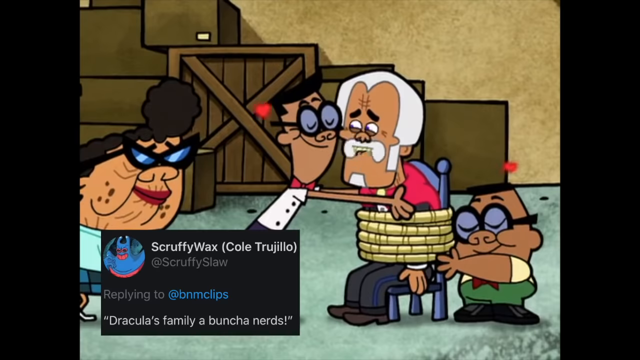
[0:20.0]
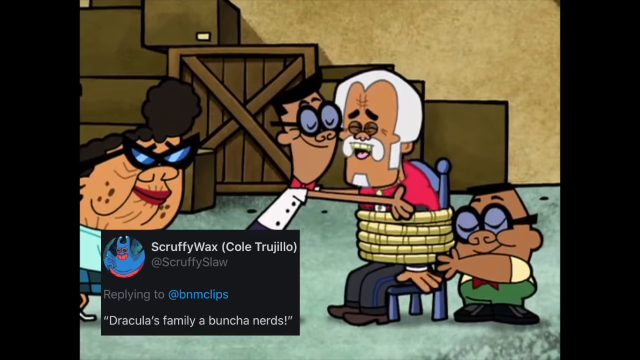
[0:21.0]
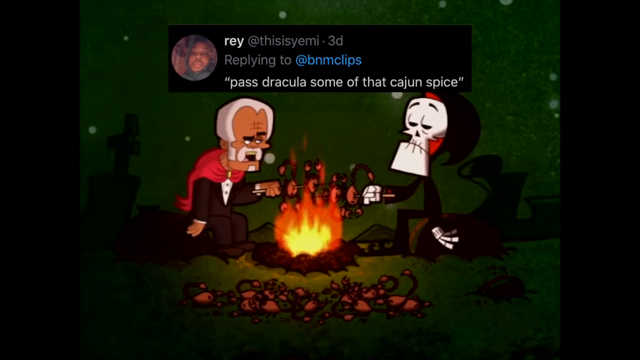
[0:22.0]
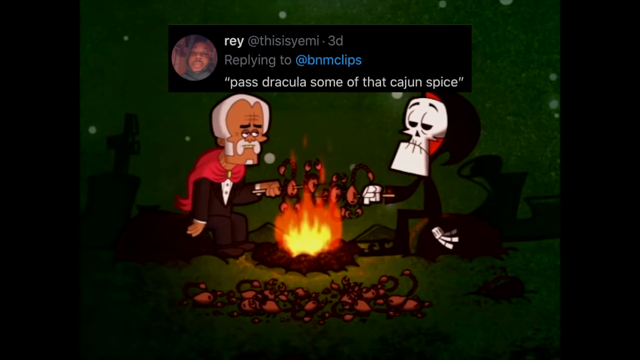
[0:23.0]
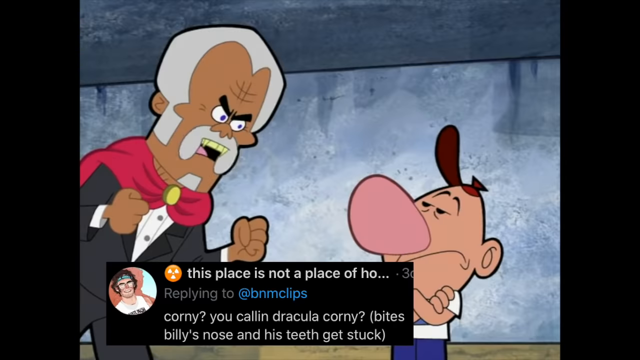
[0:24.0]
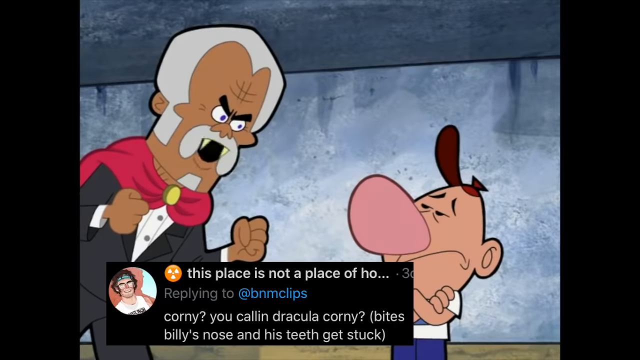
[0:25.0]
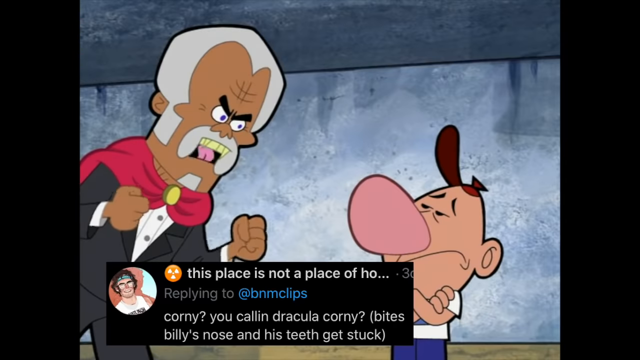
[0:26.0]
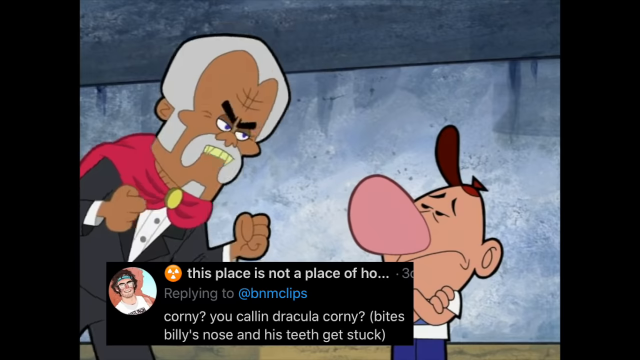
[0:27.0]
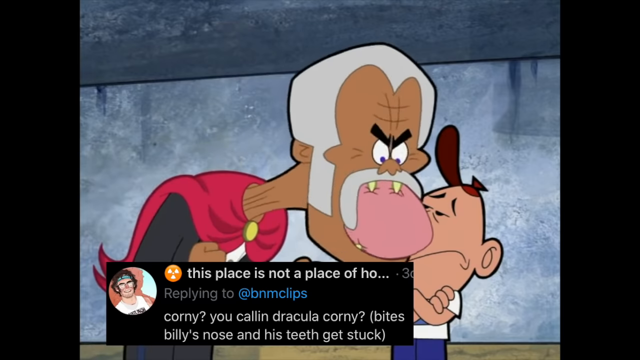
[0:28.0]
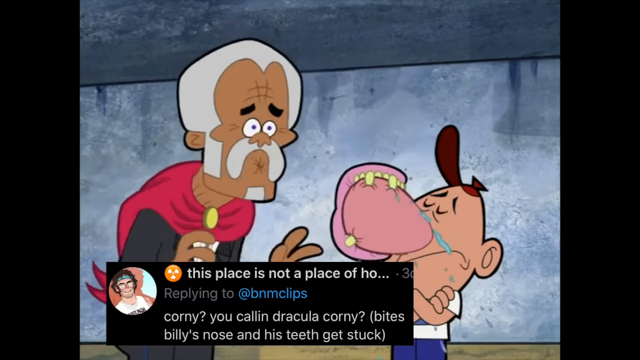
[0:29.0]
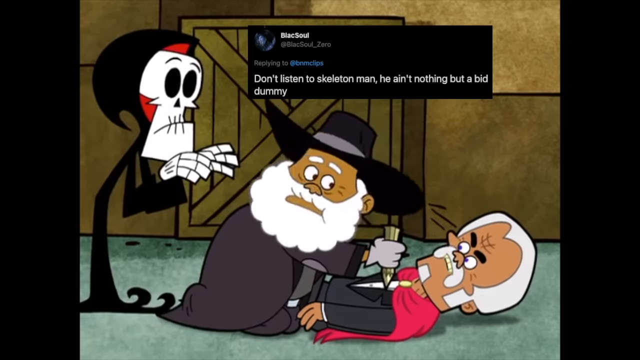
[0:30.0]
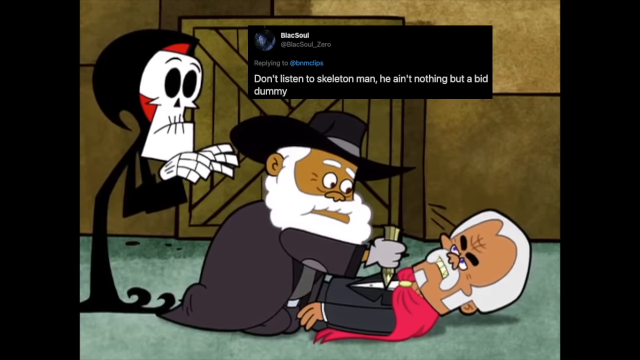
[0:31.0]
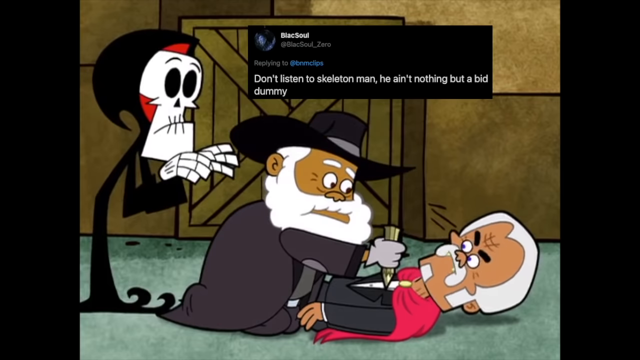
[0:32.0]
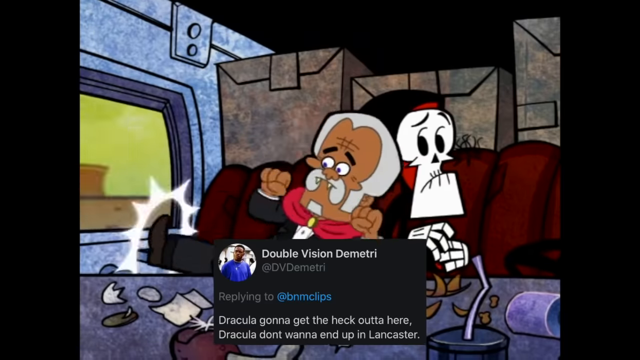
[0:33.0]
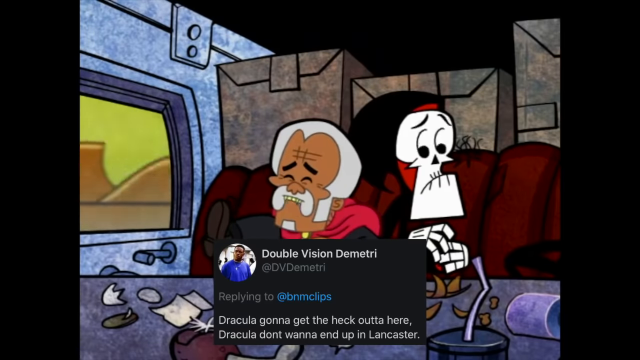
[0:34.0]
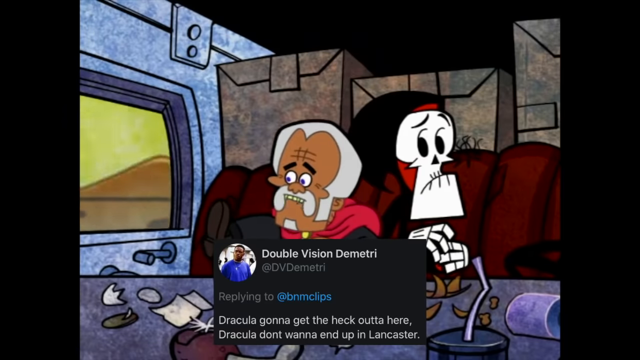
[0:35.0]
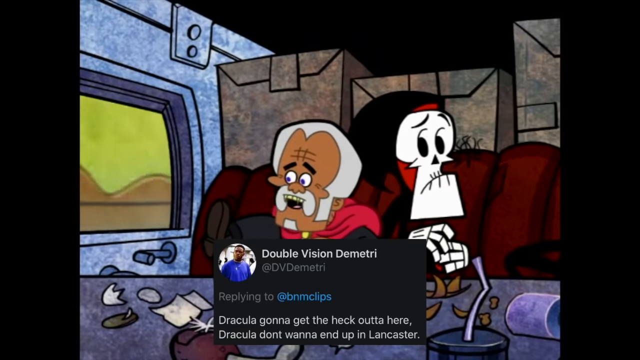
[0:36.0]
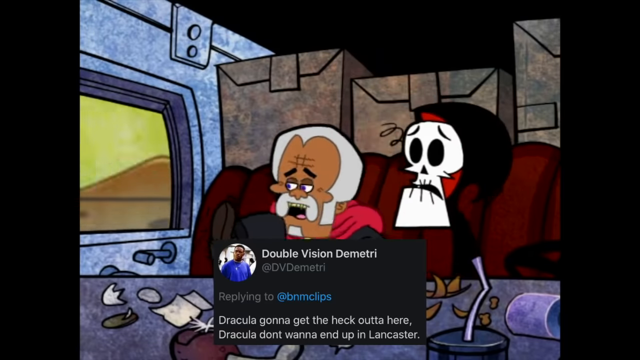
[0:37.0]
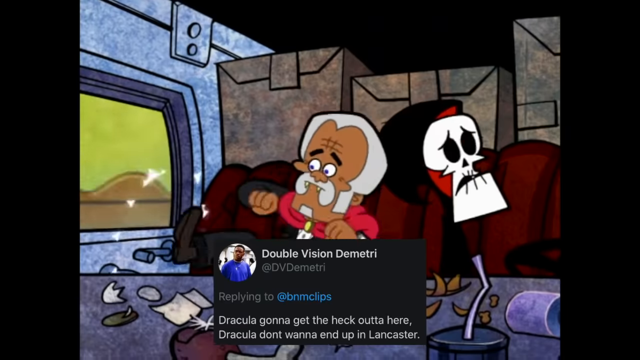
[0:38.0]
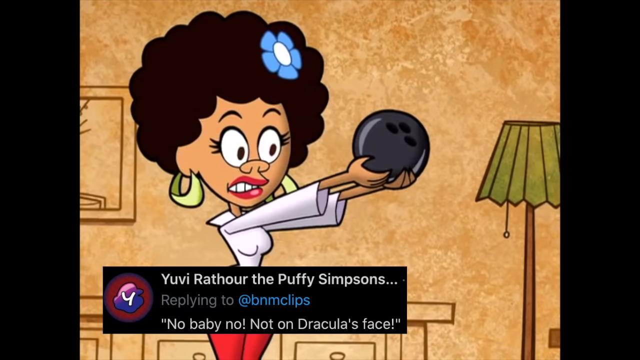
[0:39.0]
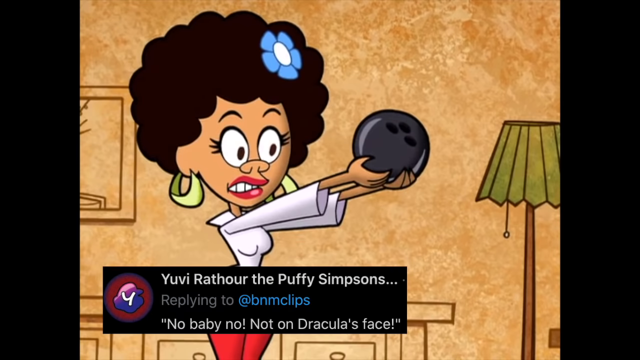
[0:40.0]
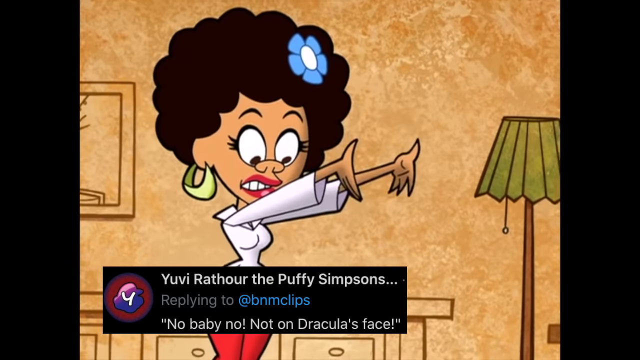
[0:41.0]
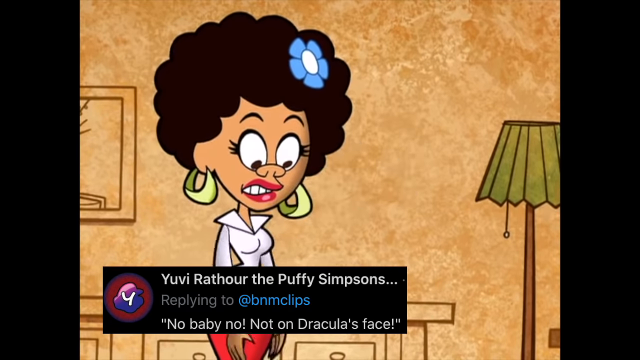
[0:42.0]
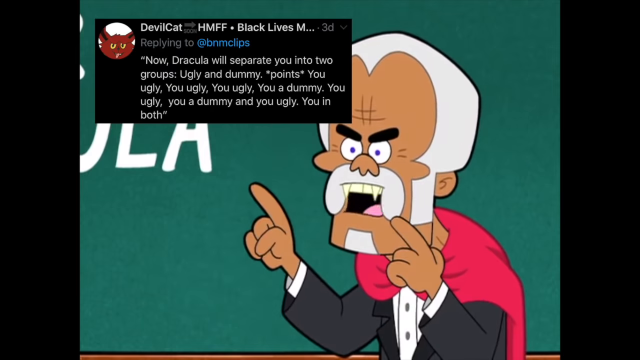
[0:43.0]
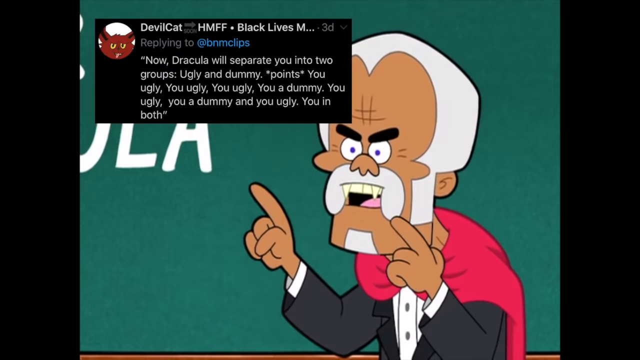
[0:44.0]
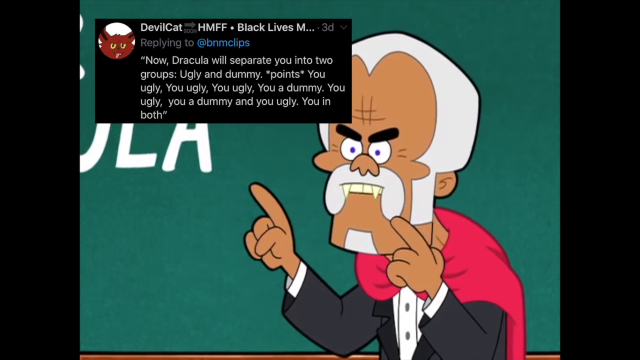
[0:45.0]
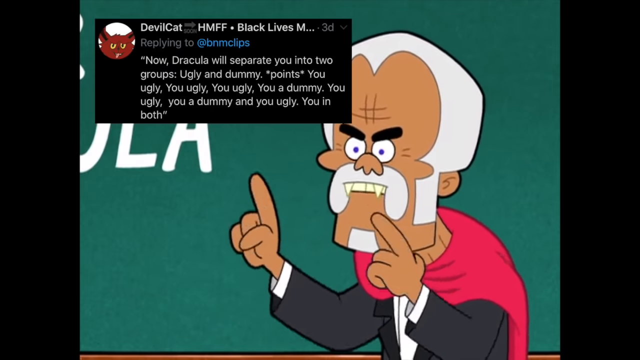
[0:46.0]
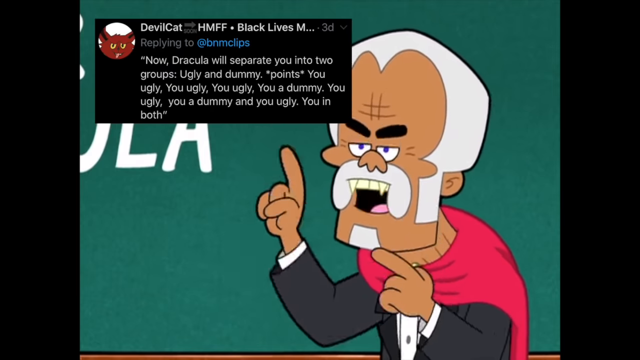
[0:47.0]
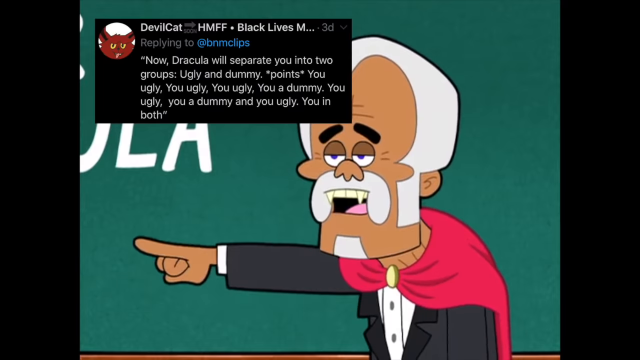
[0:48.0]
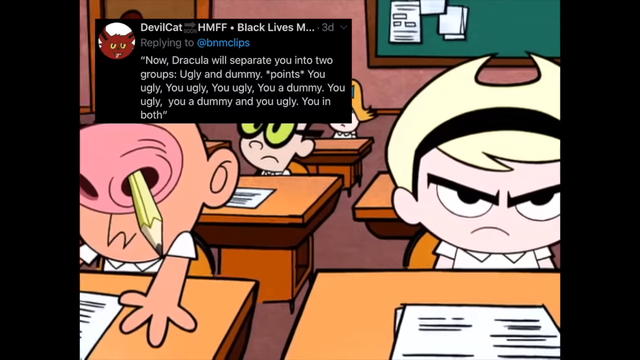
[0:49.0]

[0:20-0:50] An old man is chained to a chair while people come up and hug him; he looks at everybody around him. Suddenly Dracula pops into the scene, looks at a young boy with a big nose and bites down on the nose, and his Dracula dentures come out. Next, Dracula is stuck in the back of a hearse with a skeleton and cannot get out, and bowling balls are dropped on his head while he lies there.